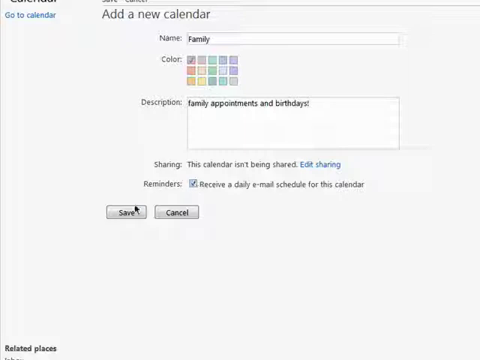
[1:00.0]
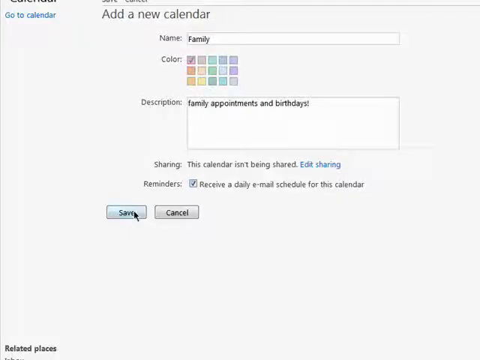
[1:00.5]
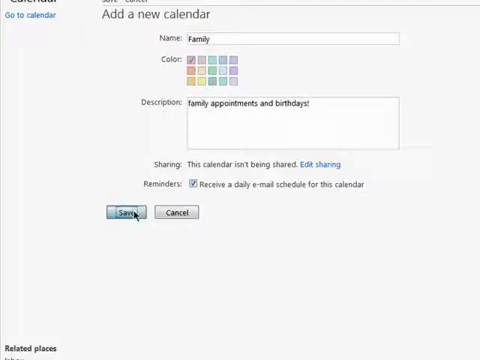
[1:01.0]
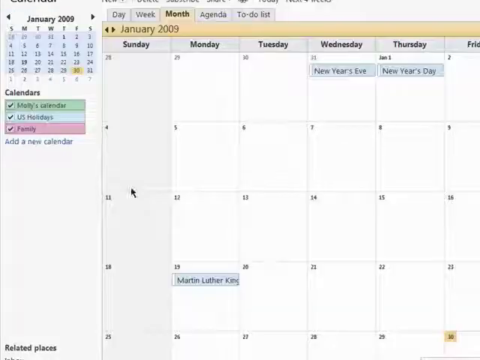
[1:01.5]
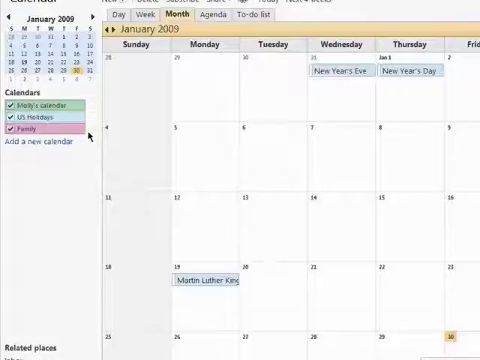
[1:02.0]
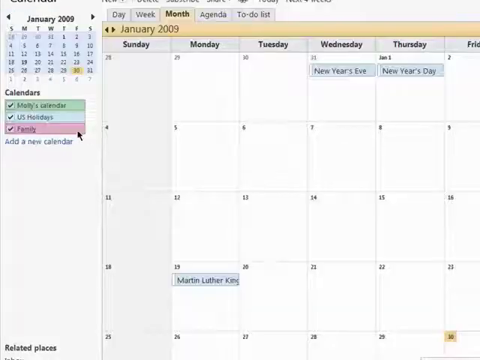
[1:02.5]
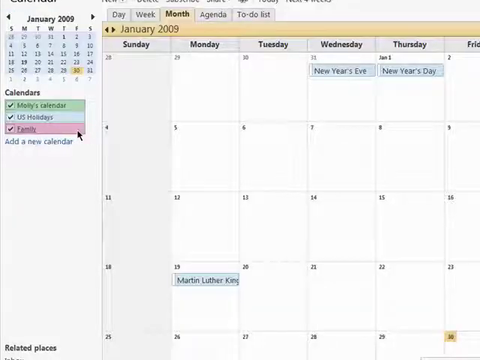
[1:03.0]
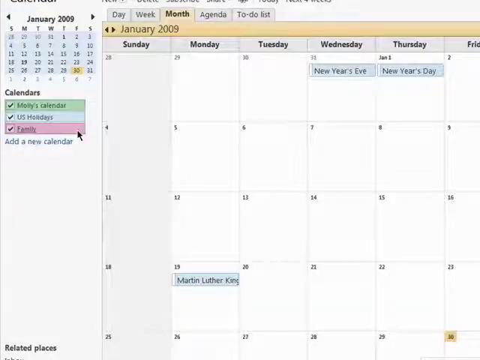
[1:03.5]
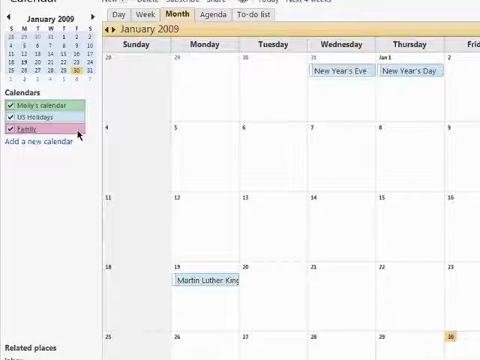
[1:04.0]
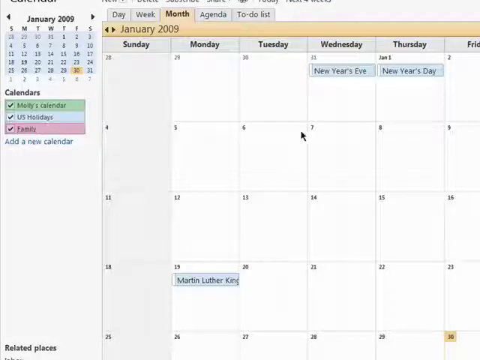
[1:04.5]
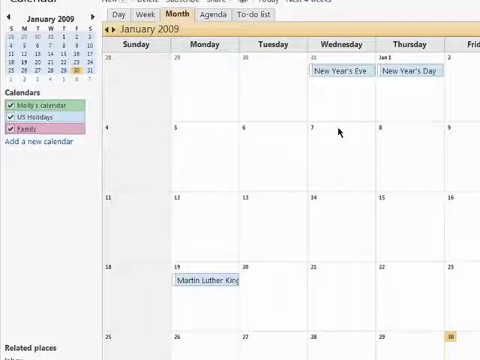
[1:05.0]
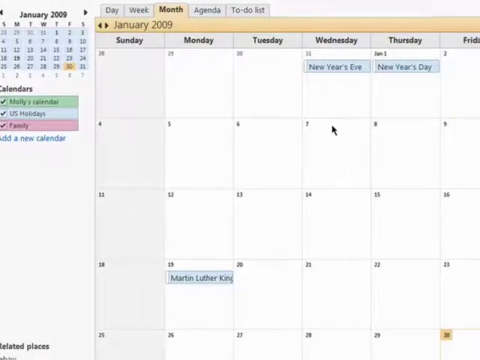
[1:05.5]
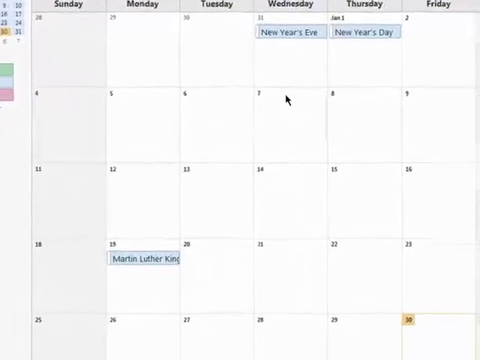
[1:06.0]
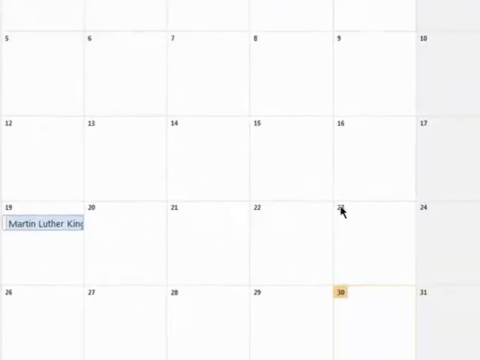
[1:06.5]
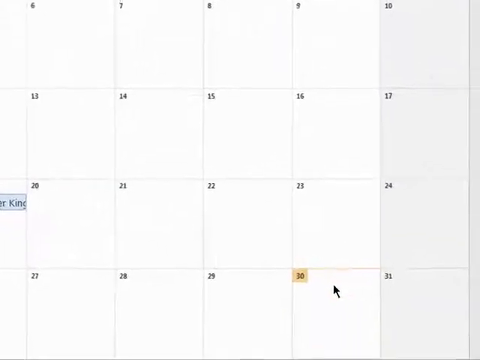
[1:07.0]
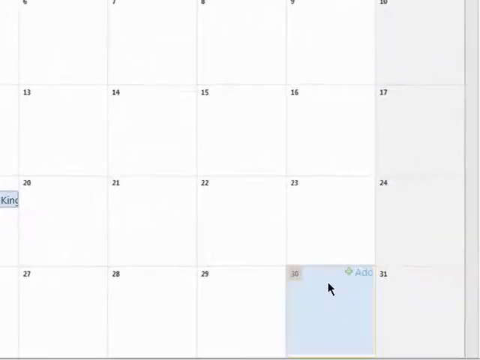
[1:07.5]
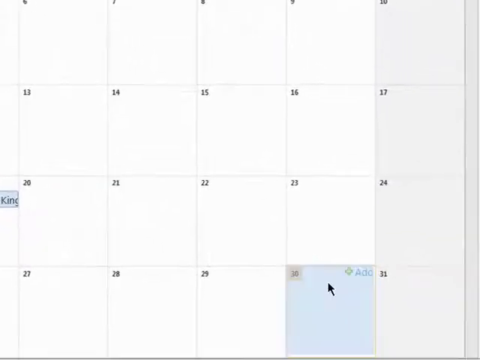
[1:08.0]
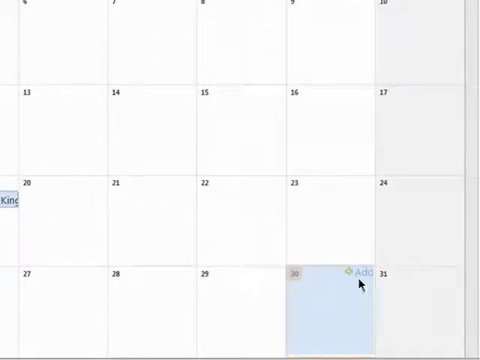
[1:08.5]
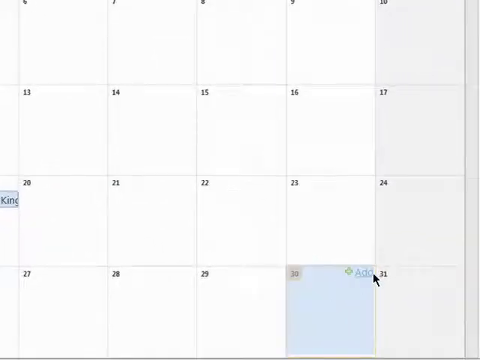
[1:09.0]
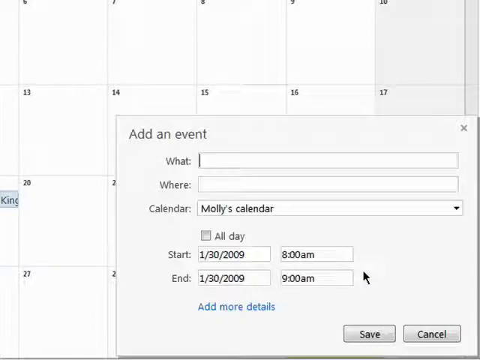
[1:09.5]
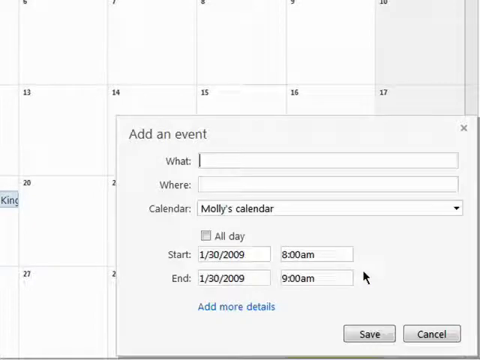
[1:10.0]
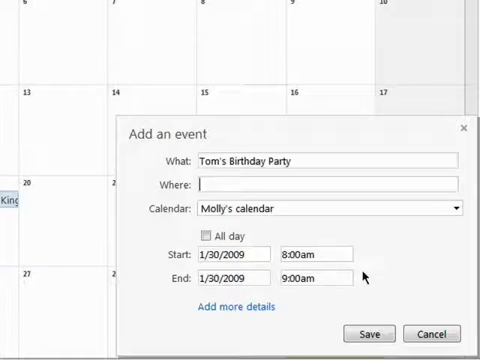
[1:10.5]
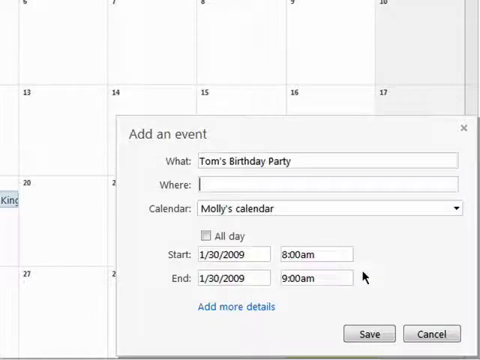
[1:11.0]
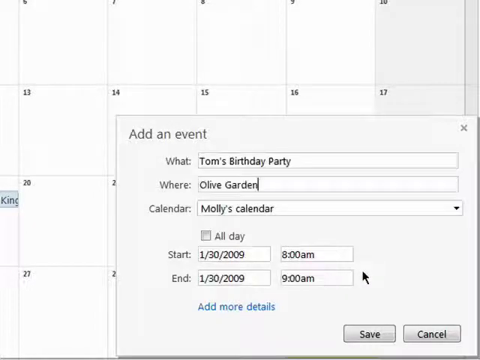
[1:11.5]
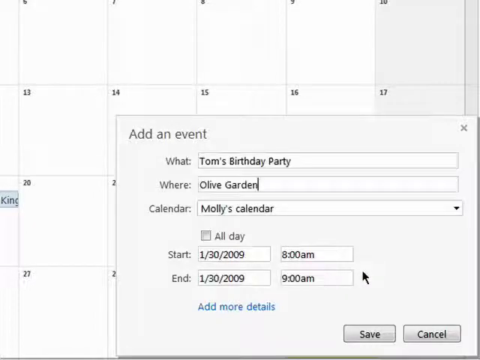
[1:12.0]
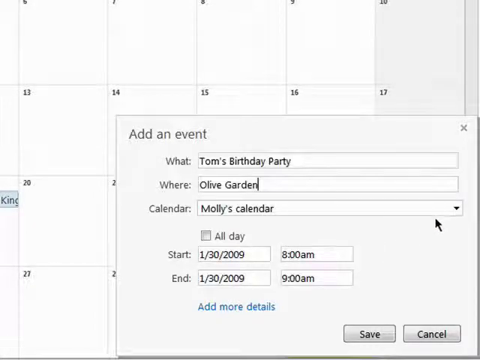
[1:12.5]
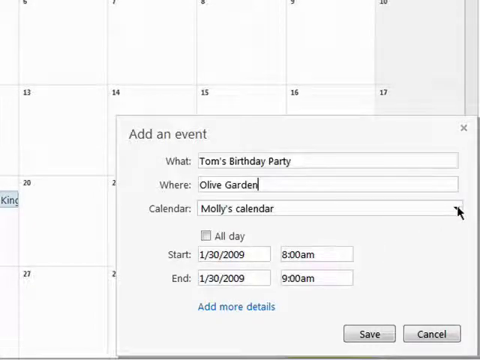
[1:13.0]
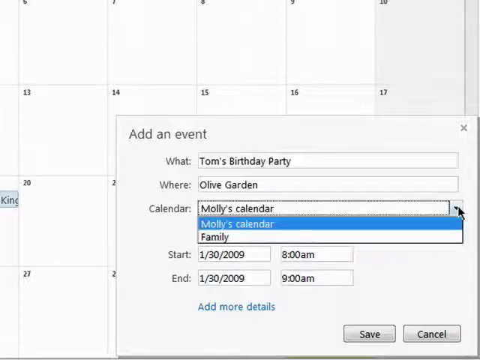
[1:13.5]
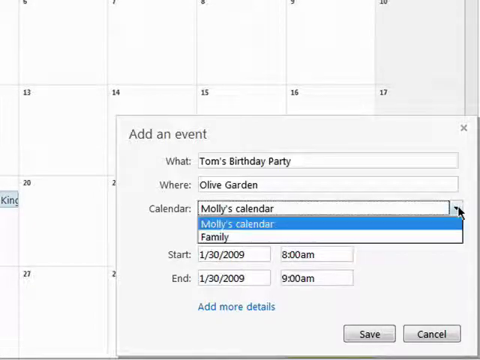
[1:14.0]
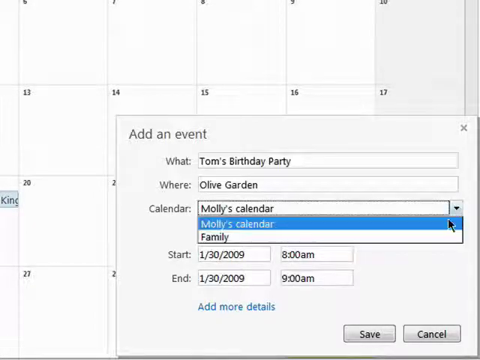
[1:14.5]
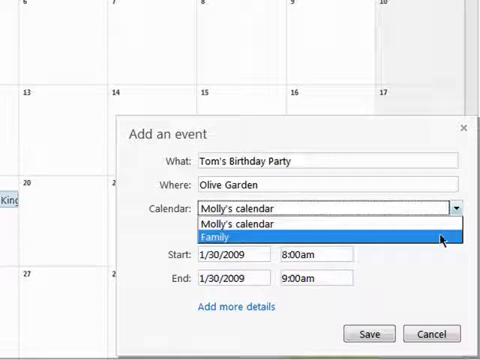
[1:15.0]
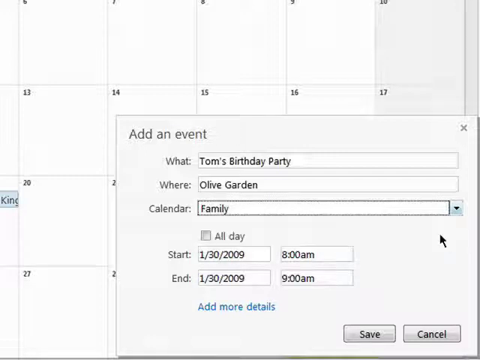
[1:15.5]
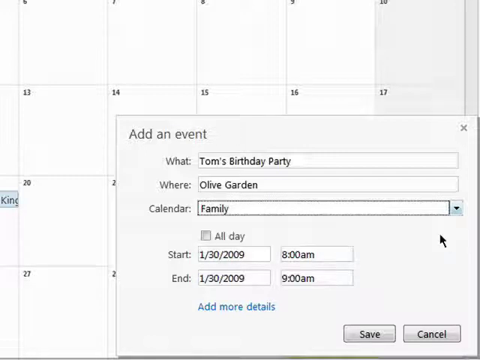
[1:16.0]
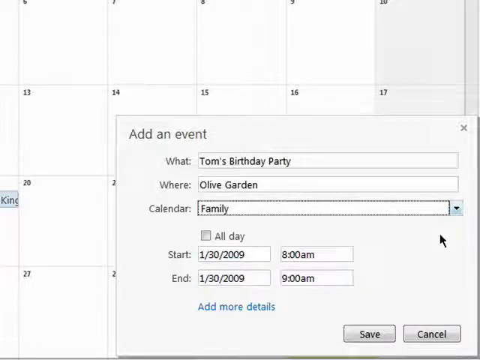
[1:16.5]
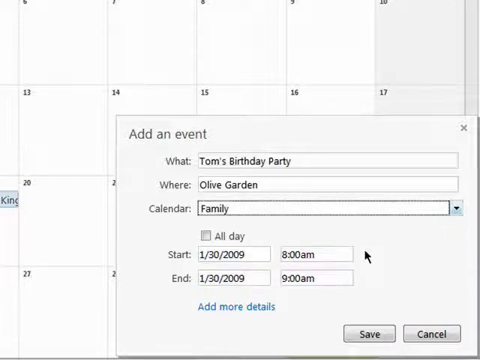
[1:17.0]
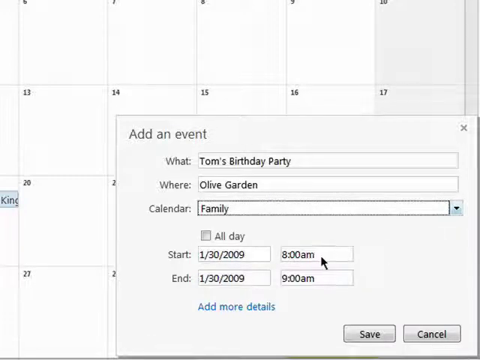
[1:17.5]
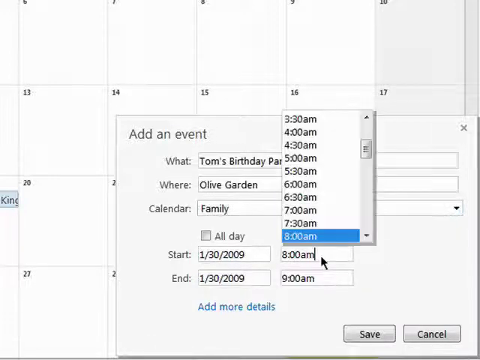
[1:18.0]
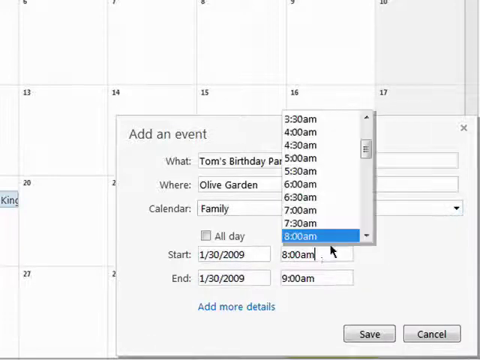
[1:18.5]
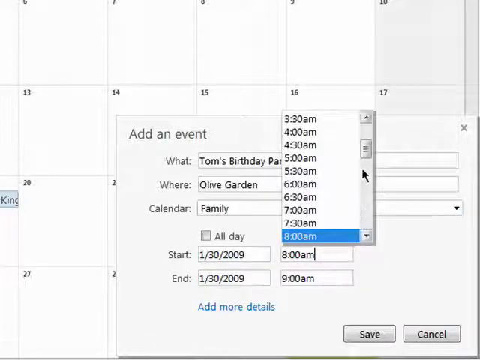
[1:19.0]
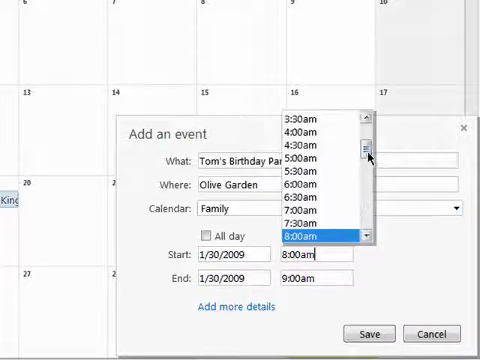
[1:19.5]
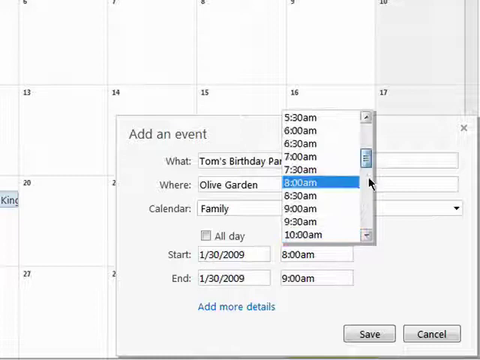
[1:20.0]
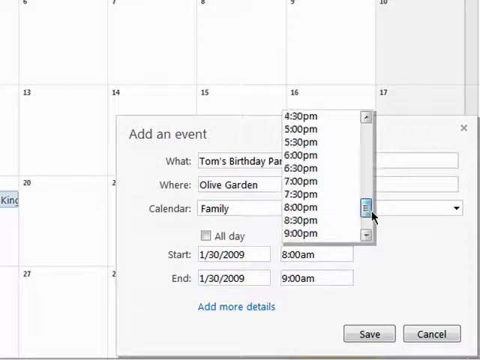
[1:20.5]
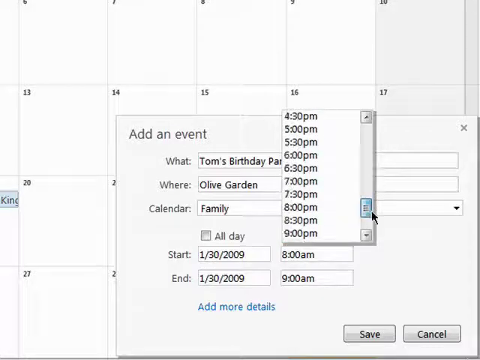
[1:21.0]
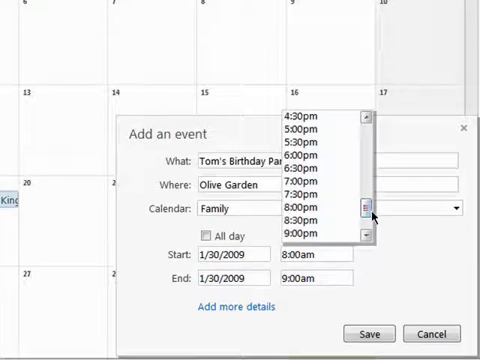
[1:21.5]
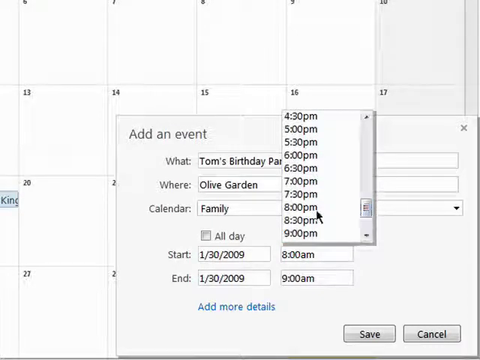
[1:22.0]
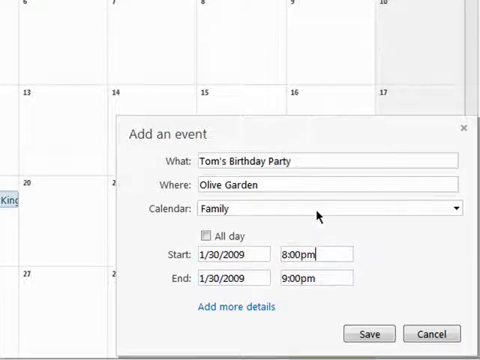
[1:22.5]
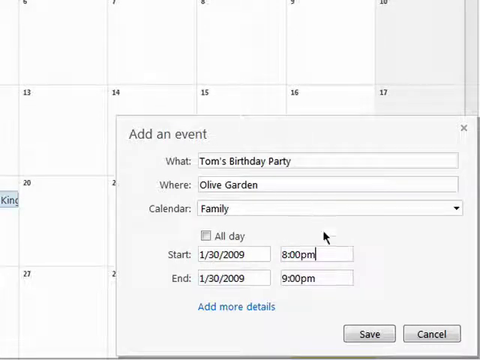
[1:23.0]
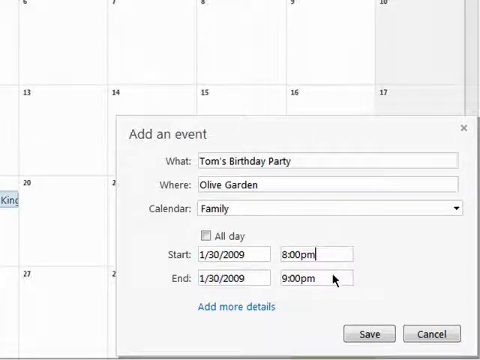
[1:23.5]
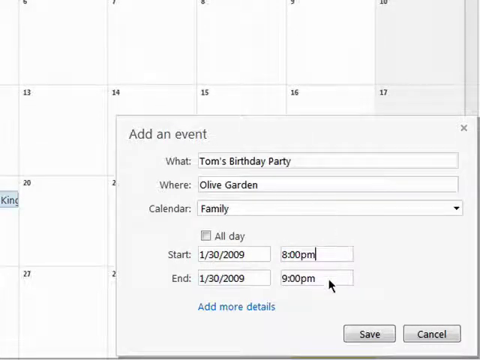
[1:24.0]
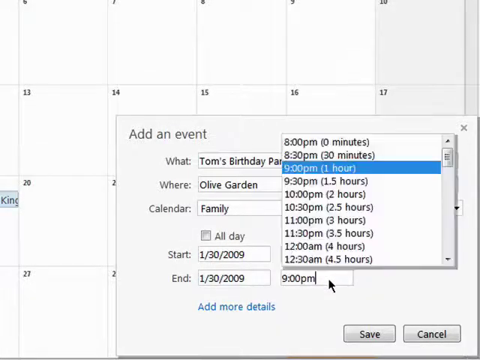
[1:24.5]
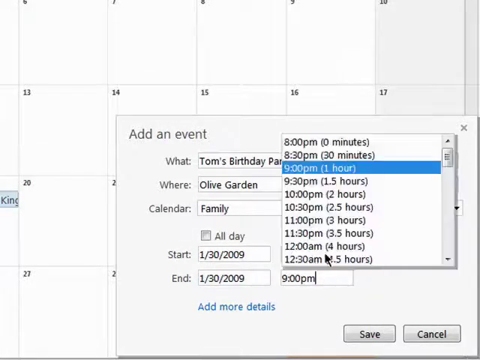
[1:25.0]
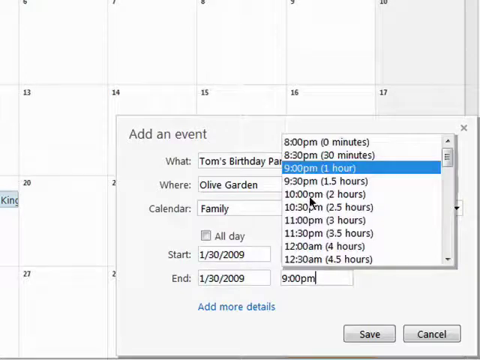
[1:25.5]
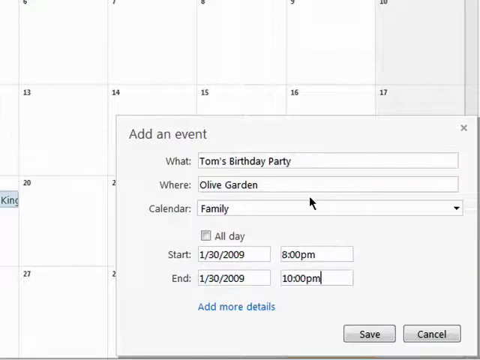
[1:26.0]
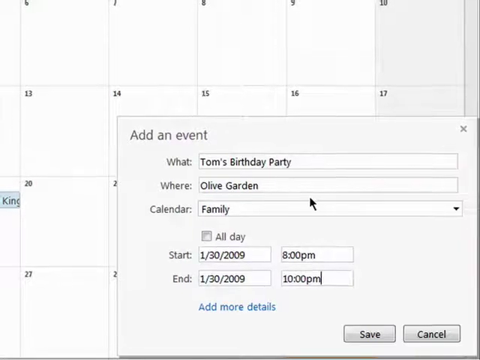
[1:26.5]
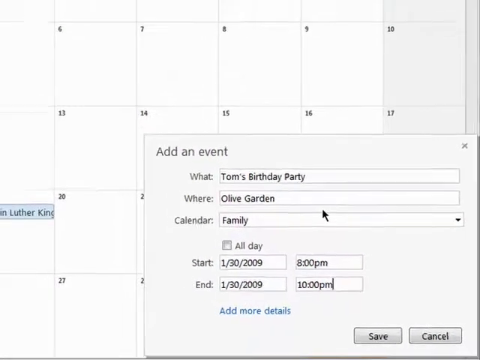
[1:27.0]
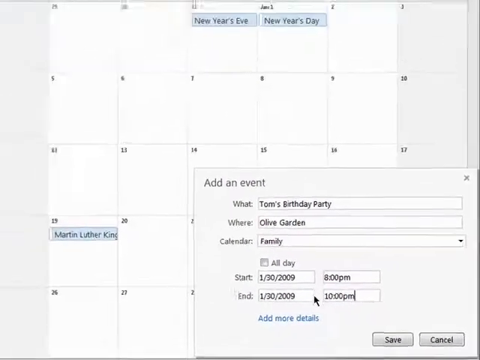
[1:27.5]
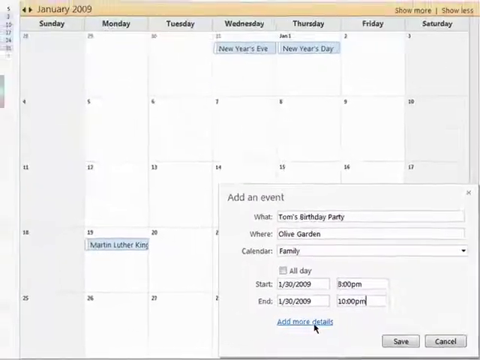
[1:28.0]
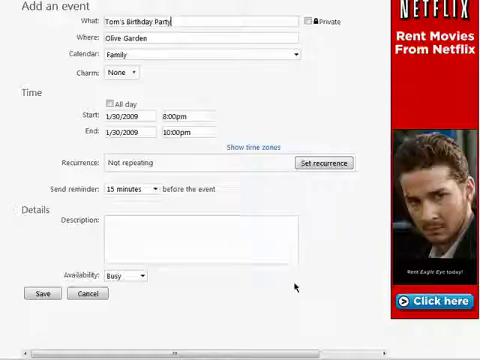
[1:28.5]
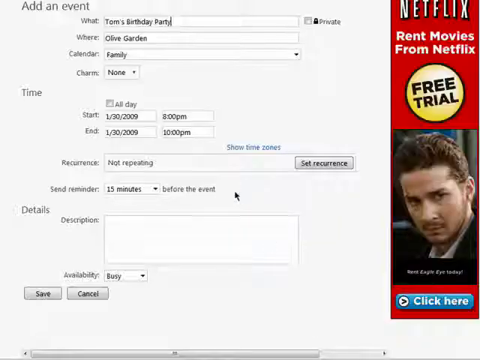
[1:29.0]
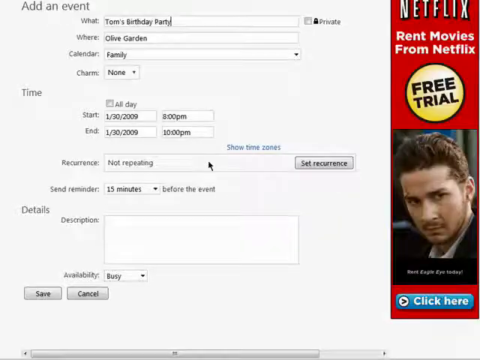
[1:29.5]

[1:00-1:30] A computer screen shows the Microsoft Windows Live Calendar open in month view, showing January 2009. The user moves the cursor to the left-hand menu pane under the calendar section and hovers over the family option in the calendars view. The camera subtly zooms in closer to the screen and focuses on the cell for the 30th of January. The user selects this cell and a pop-up window called "add an event" appears. They type "Tom's birthday party" in the what input and "Olive Garden" in the where input. Using a dropdown menu, they select family as the calendar. They adjust the start time, using the scroll bar to scroll down and select 8 p.m., and then adjust the end time, clicking on 10 p.m. The camera then pans out.